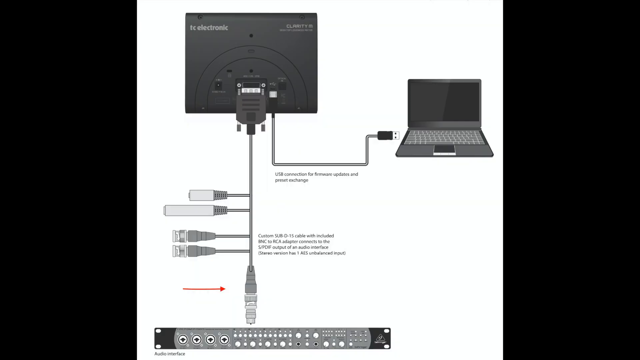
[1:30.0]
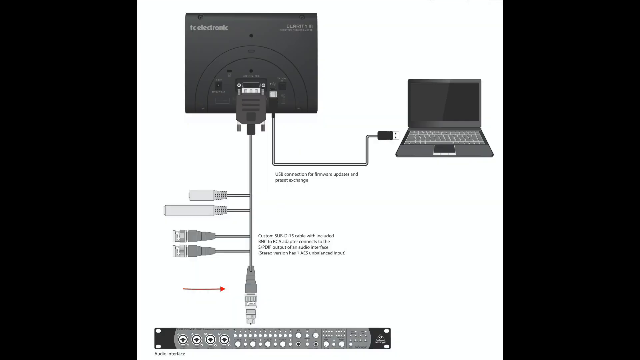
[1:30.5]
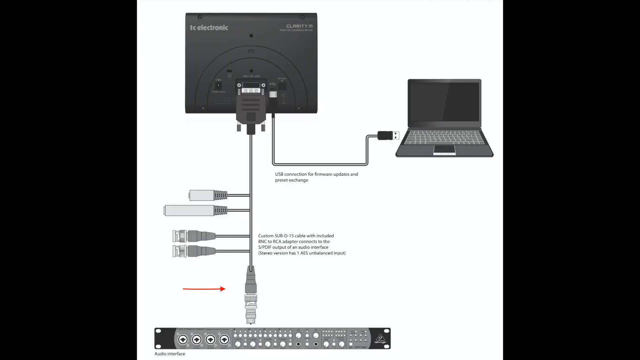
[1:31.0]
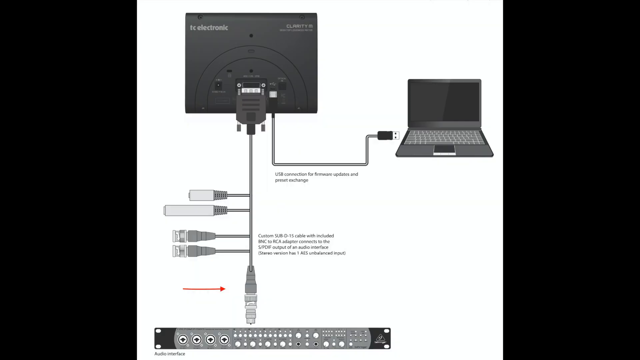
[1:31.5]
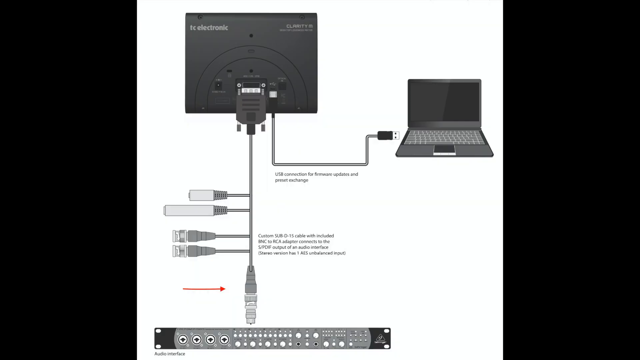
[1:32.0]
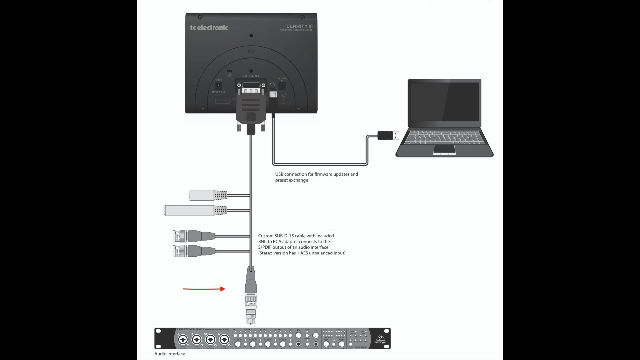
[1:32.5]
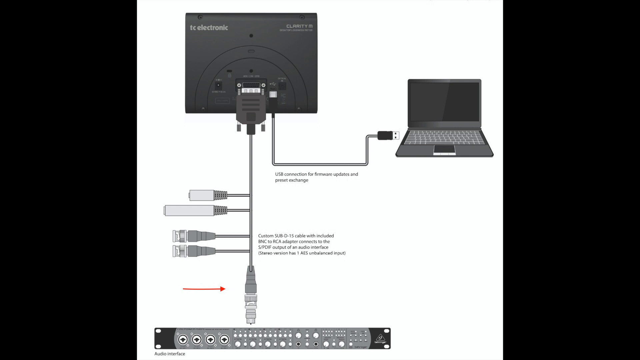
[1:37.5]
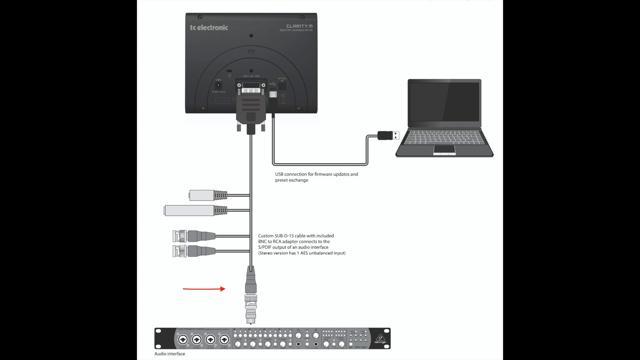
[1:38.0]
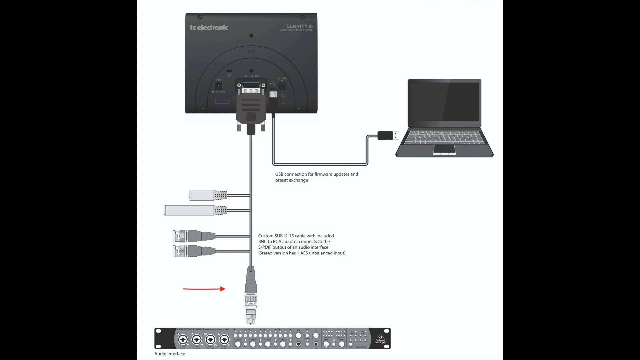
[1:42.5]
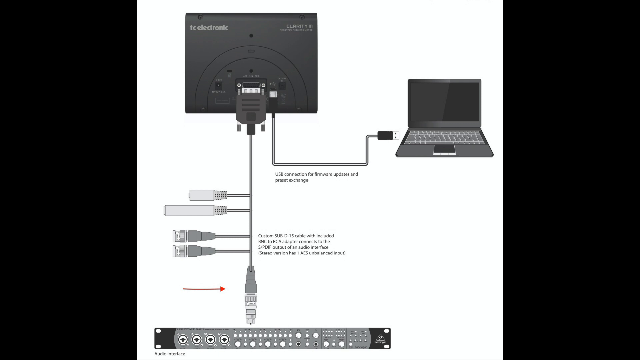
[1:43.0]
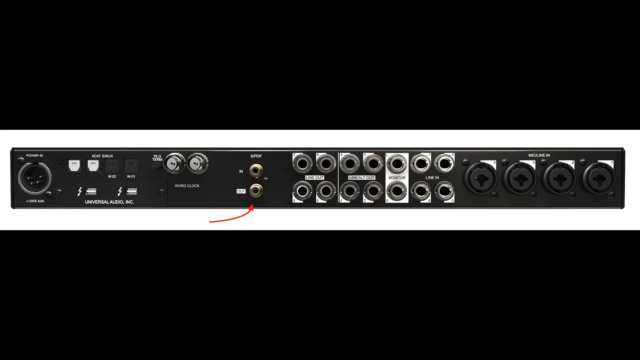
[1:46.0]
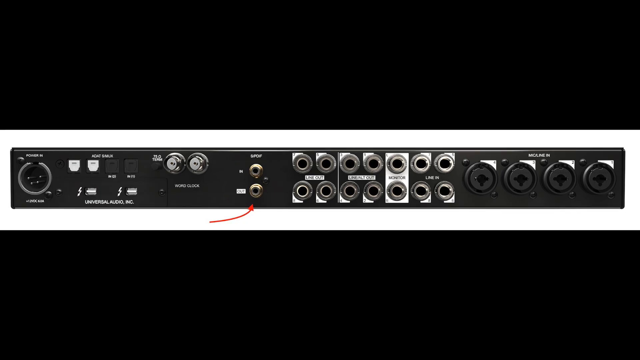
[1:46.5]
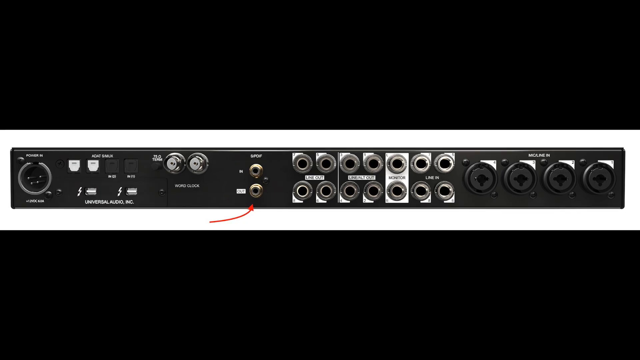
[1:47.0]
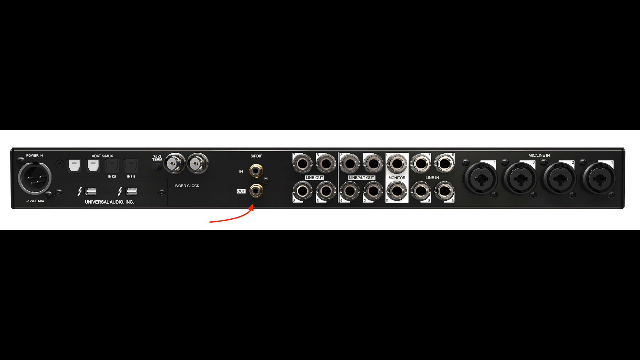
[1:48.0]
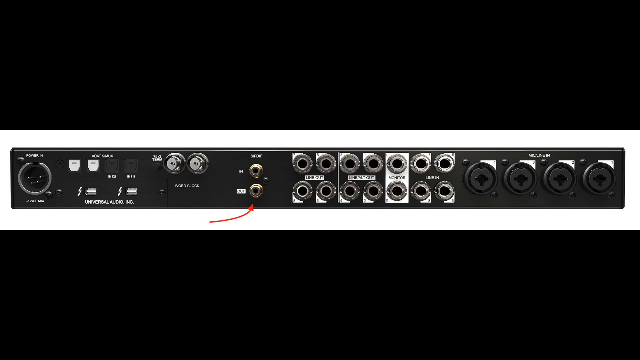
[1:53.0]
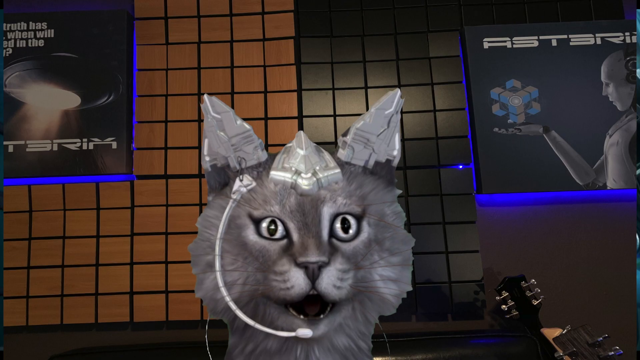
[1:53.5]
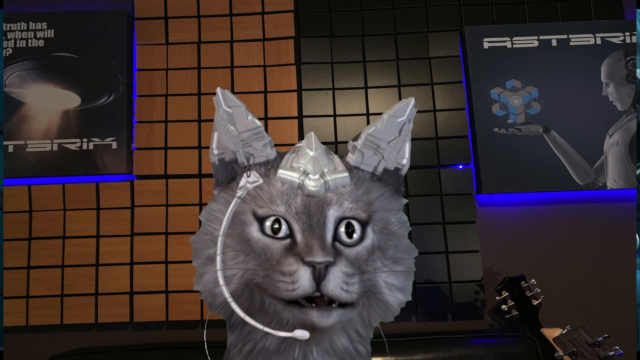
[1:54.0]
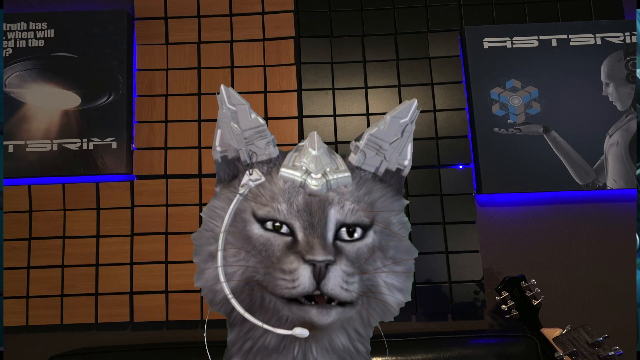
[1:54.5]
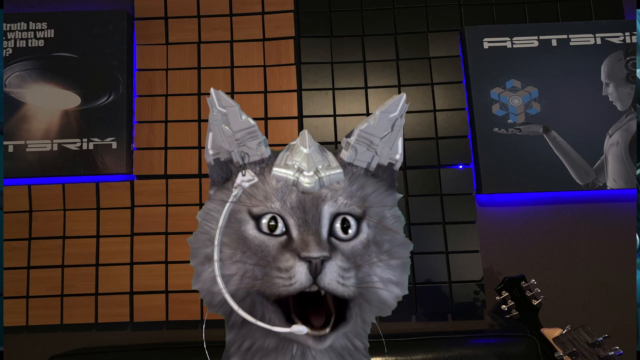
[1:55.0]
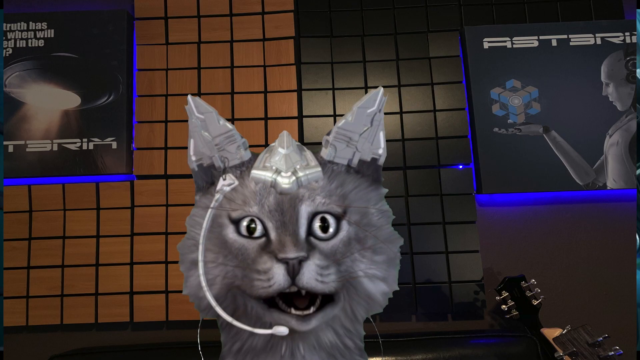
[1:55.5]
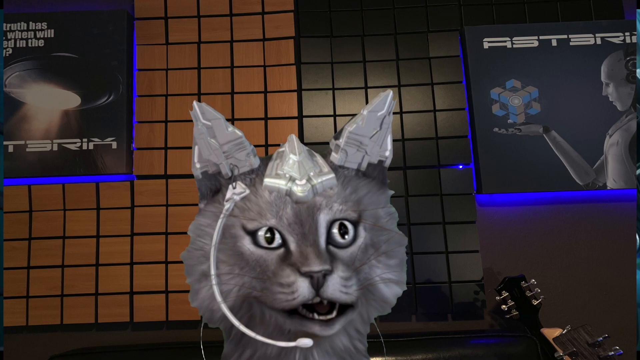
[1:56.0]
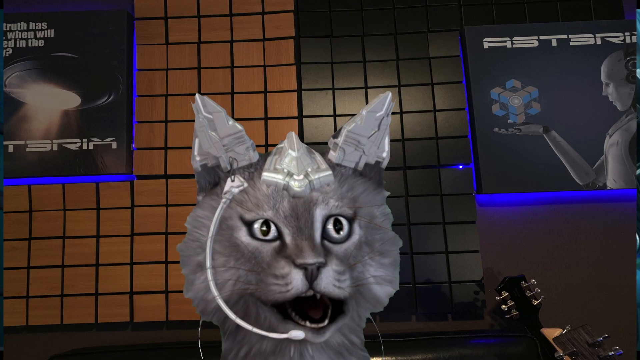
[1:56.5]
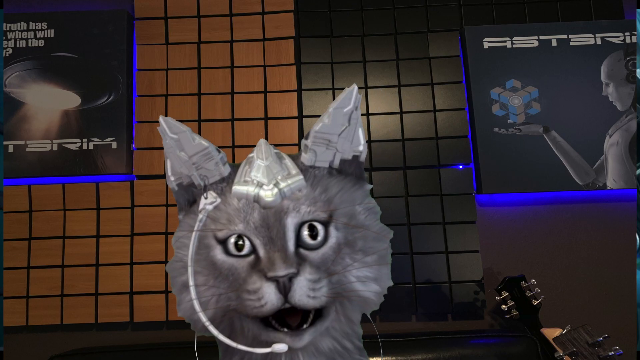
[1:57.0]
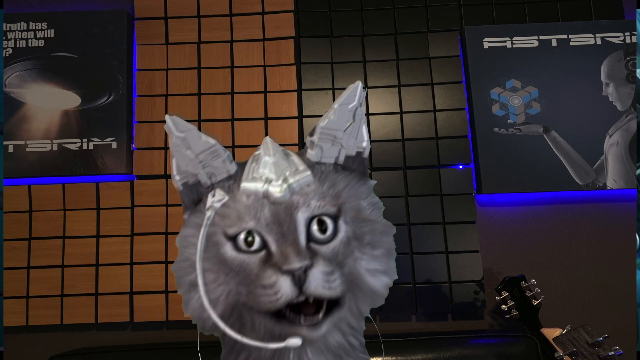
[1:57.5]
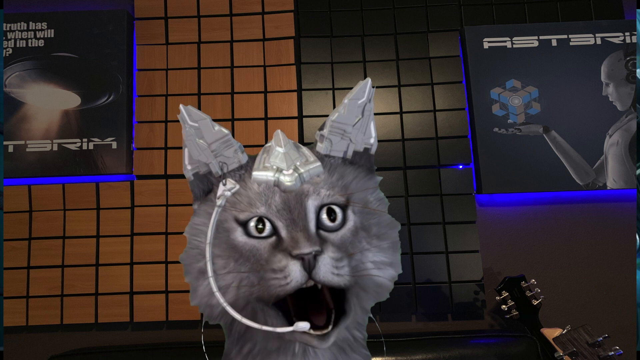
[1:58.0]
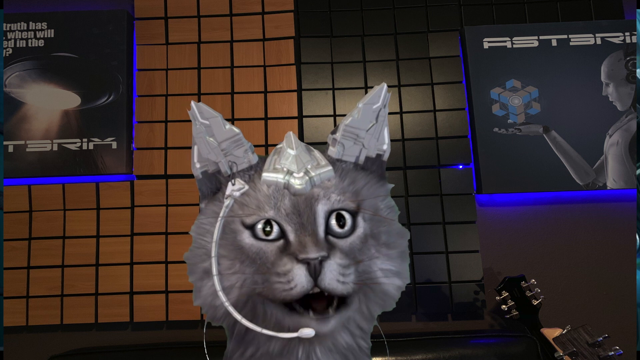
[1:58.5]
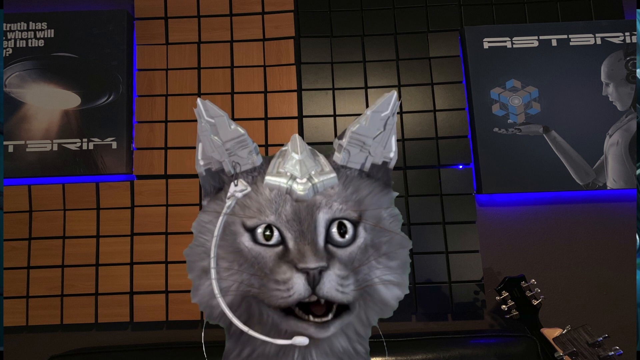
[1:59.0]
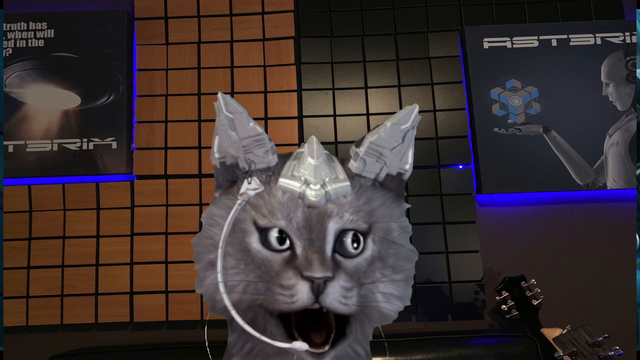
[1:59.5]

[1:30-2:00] The diagram of the TC Electronic setup with the multi-cable, the laptop and the other features stays on the screen for some time. The video then cuts to a close-up image of the back of some kind of audio system, with many round holes in which different devices can be plugged in, a power cable on the left, and other audio components. From this image the video cuts back to the cat in the room with the asterisk posters; the background is made of square tiles, light brown on the left and black on the right. The animated cat moves its head around as it speaks, wide-eyed, moving its eyes to the left and to the right, quite animated in nature.